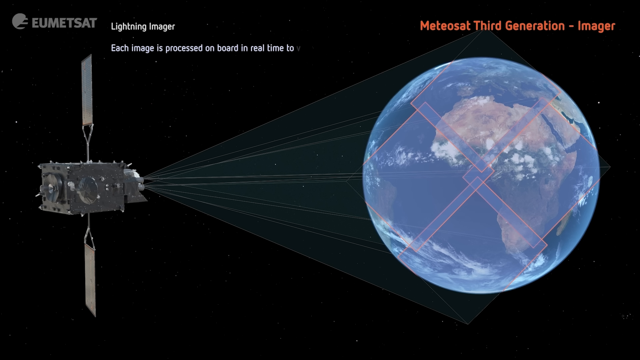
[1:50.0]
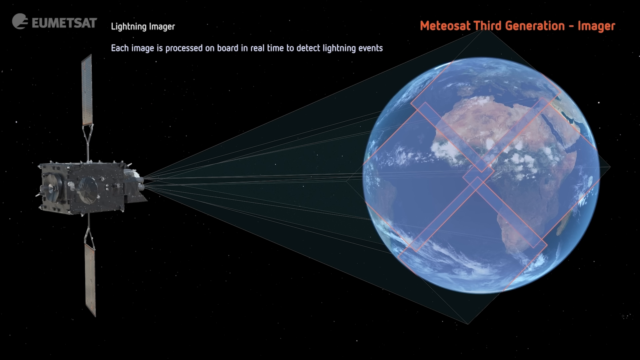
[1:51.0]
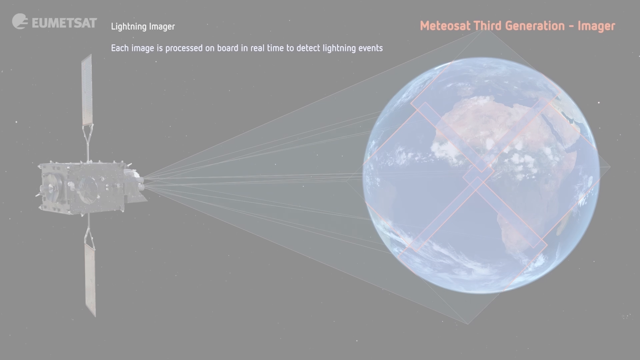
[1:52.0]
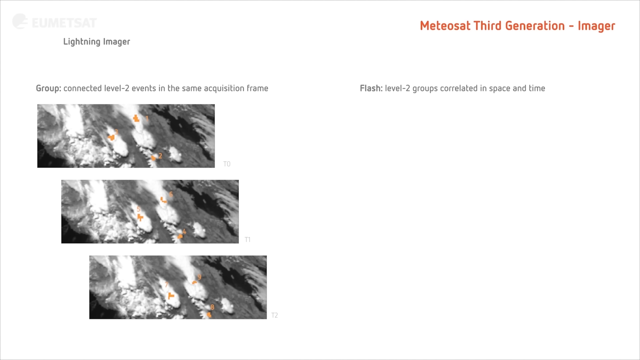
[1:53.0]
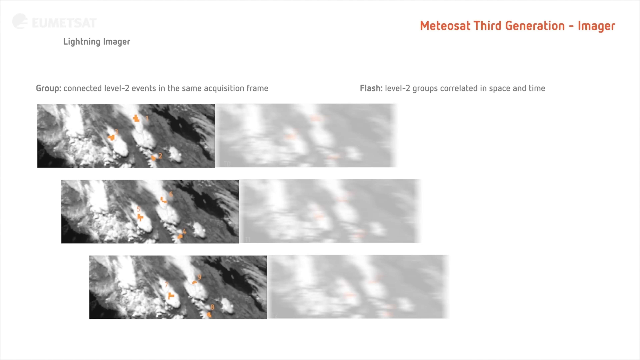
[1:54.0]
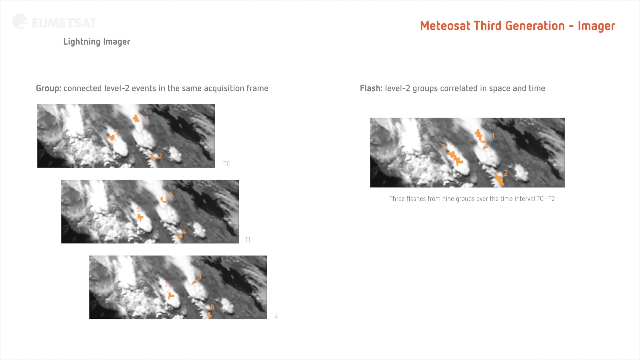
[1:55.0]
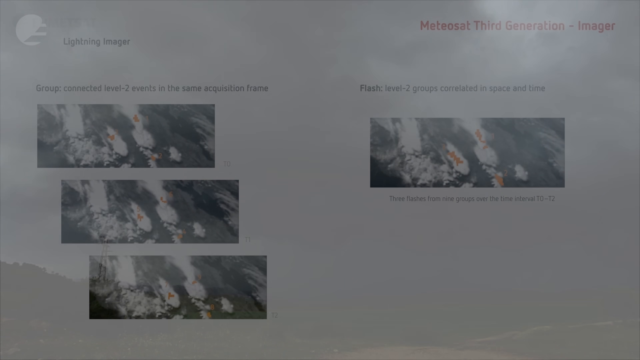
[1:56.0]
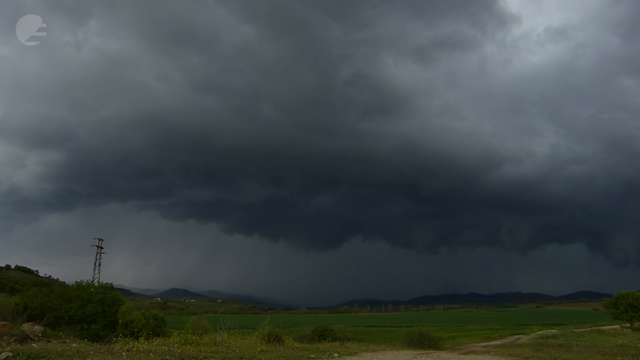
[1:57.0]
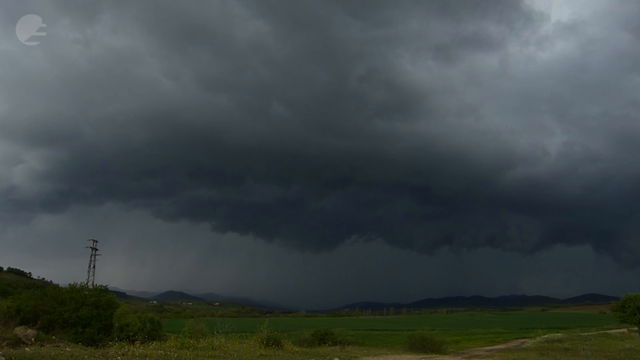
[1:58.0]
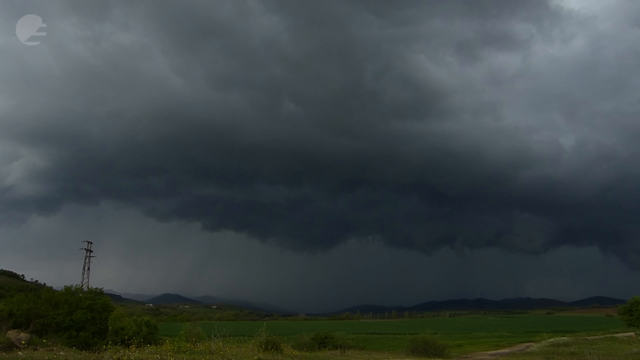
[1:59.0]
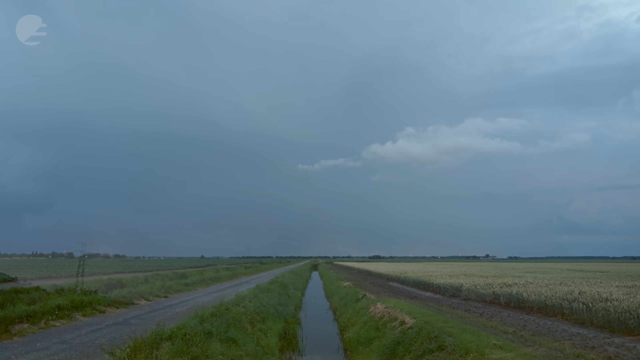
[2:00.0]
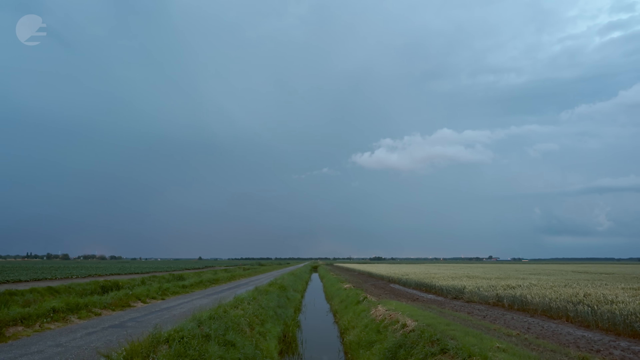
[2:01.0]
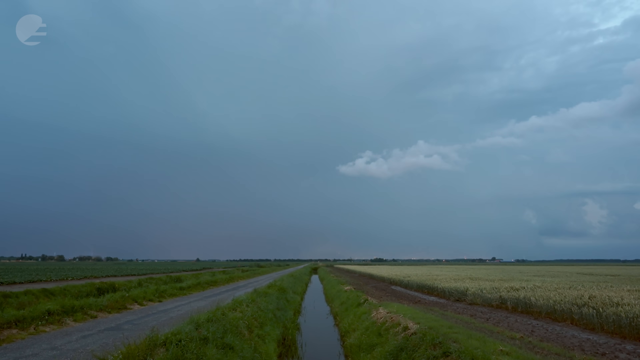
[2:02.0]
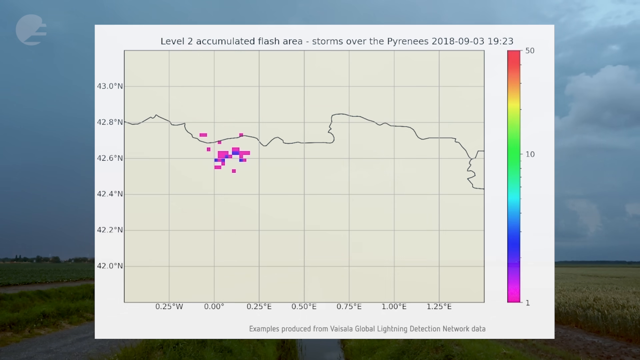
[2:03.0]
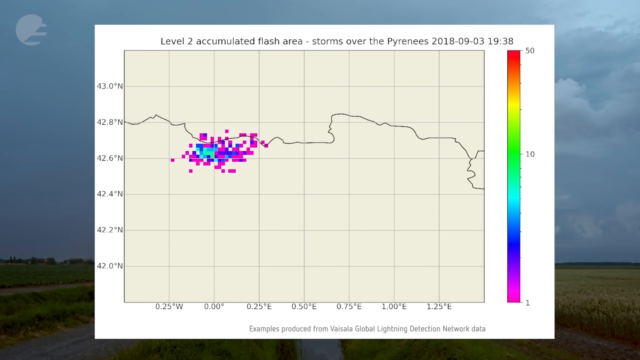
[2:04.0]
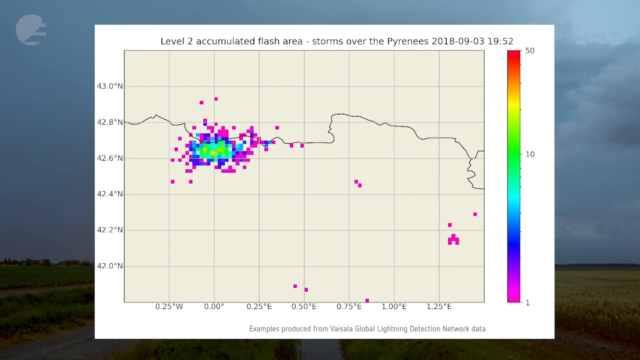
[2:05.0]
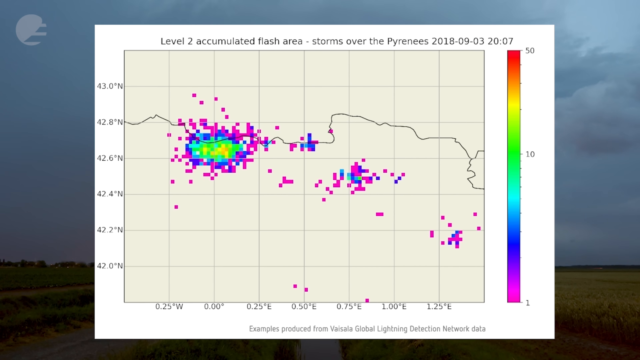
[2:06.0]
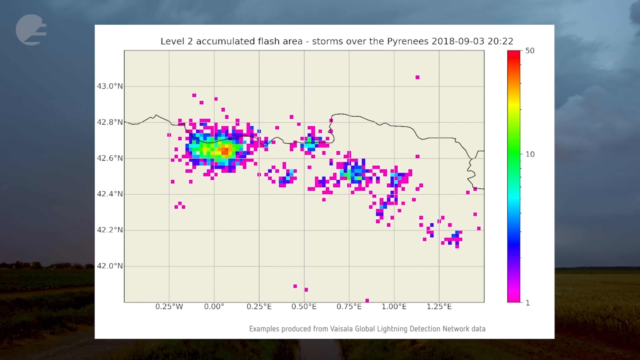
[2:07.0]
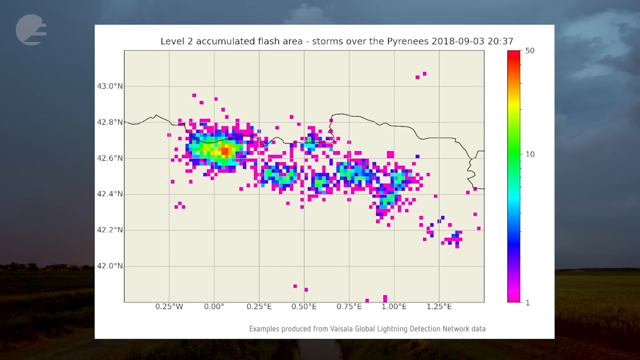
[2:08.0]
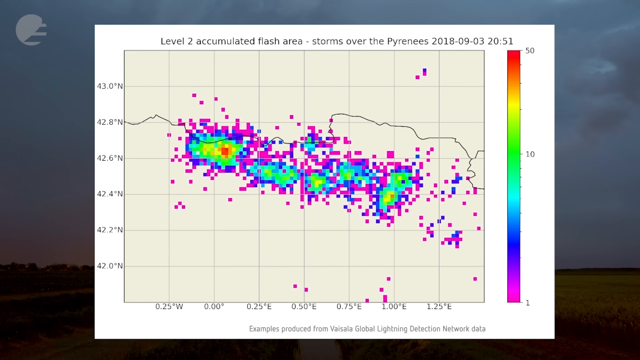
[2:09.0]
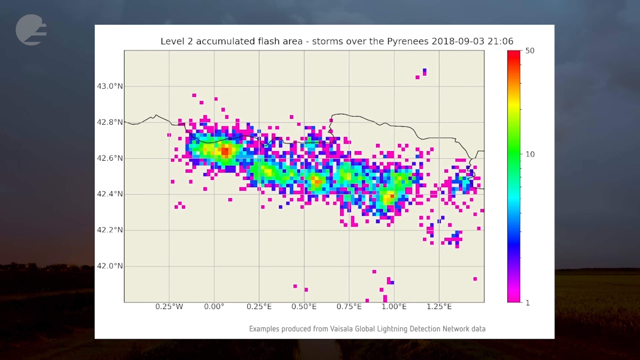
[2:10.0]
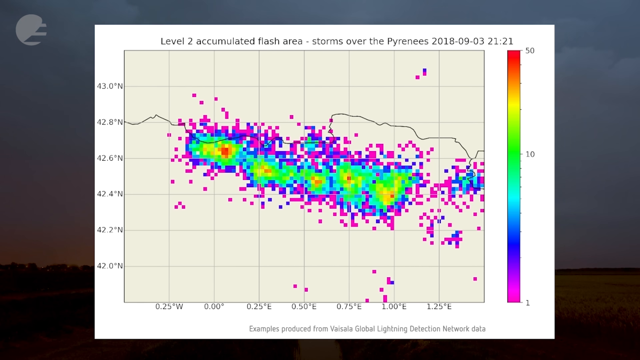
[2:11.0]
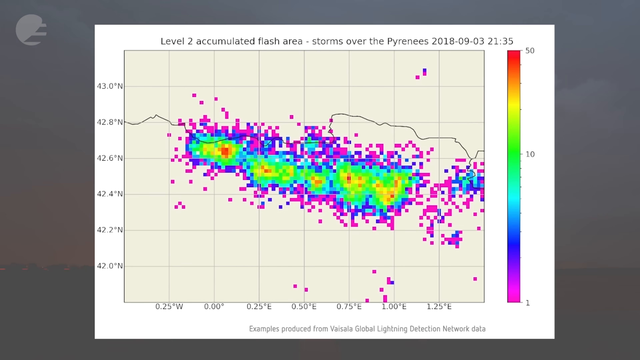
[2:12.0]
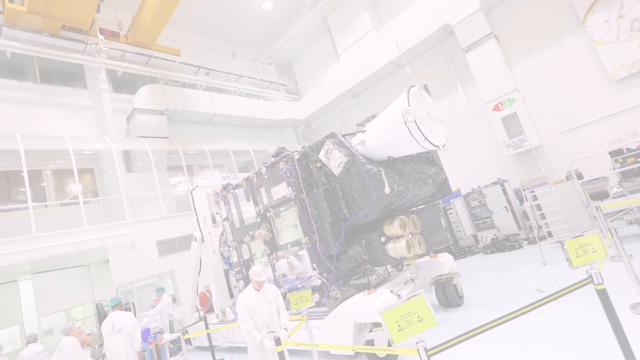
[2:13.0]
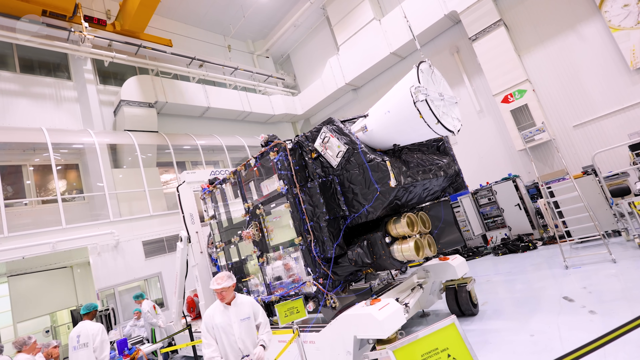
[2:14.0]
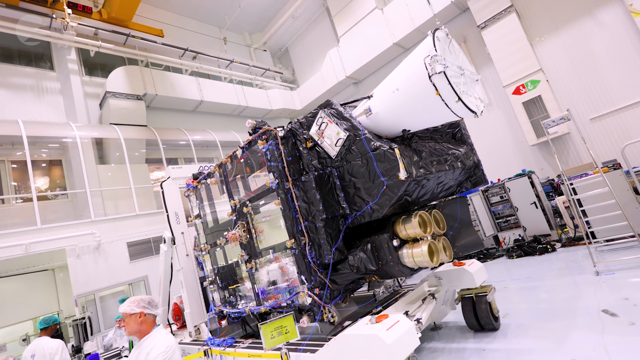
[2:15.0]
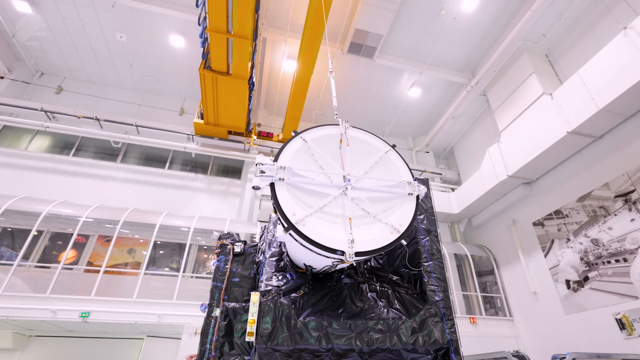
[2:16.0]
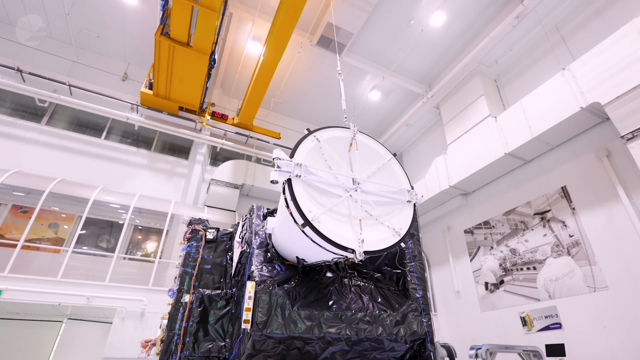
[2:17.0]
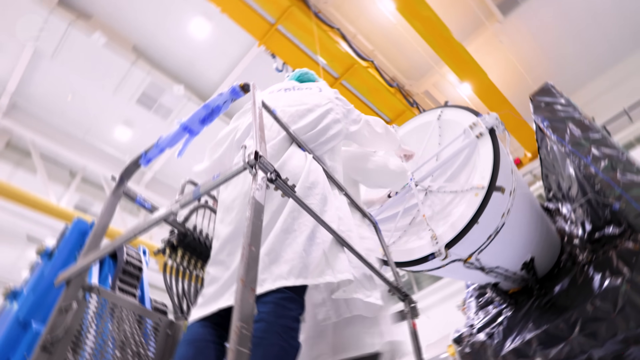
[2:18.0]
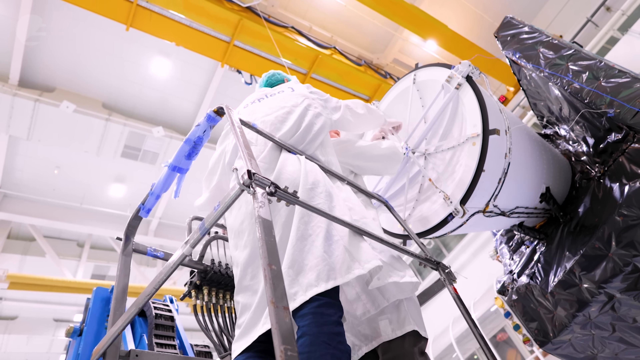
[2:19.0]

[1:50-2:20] Text overlaid on an image of a satellite viewing the Earth reads "lightning imager. Each image is processed on board in real time to detect lightning events." The screen switches to a white background with text reading "lightning imager group connected level two events in the same acquisition frame" and three pictures stacked vertically. On the right side of the image, text reads "flash level two groups correlated in space and time. Three flashes from nine groups over the time interval T zero to T two", and three images combine into one. The scene changes to a very gray outdoor view with what looks like very thick cloud cover, some kind of tower, probably for power lines, on the left, and scrub or brush at the bottom. Next, lightning flashes appear over crop areas, perhaps low-lying green grass-type plants, under a gray sky with many flashes. A map appears titled "level two accumulated flash area storms over the Pyrenees 2018 0903 1951", and dots appear on it, possibly corresponding to individual lightning strikes, until the image fills with purple, green, blue and other colored dots. Then, inside some kind of building, people are perhaps looking at or adjusting the satellite.